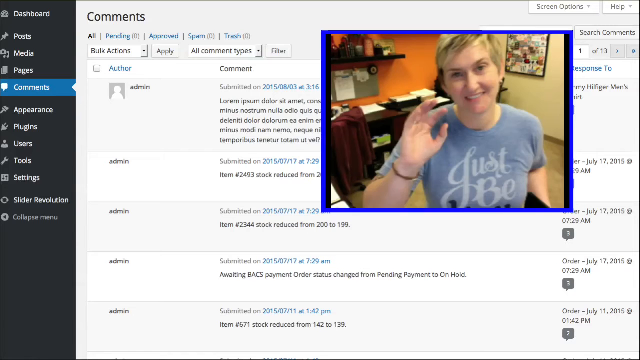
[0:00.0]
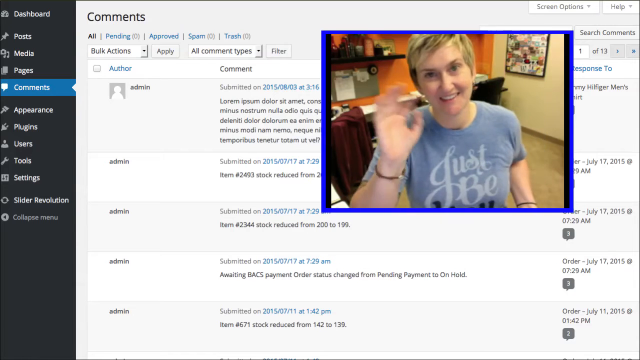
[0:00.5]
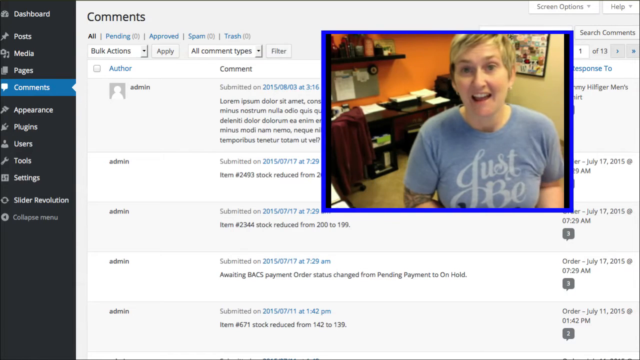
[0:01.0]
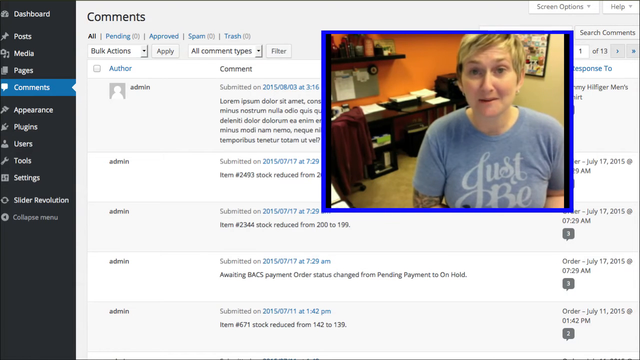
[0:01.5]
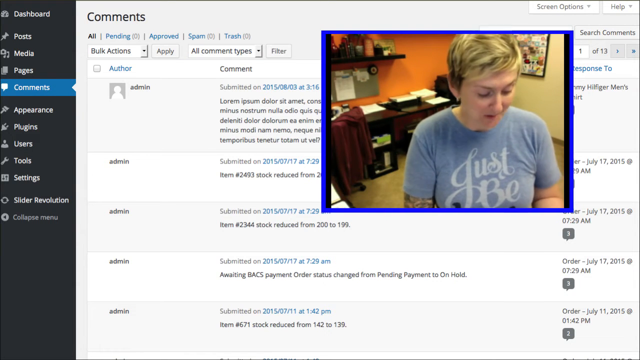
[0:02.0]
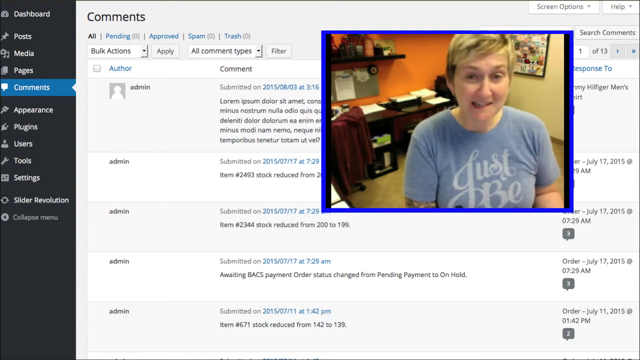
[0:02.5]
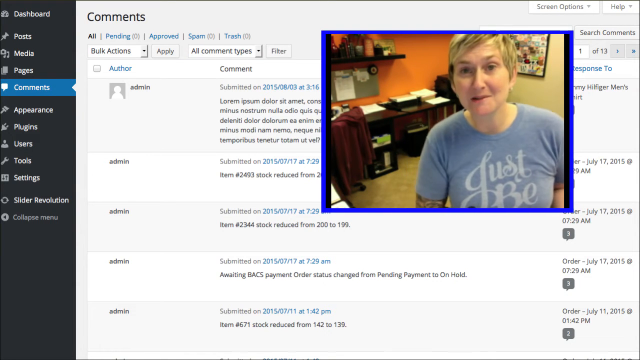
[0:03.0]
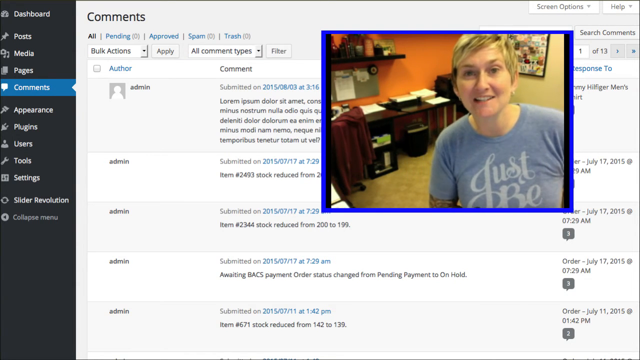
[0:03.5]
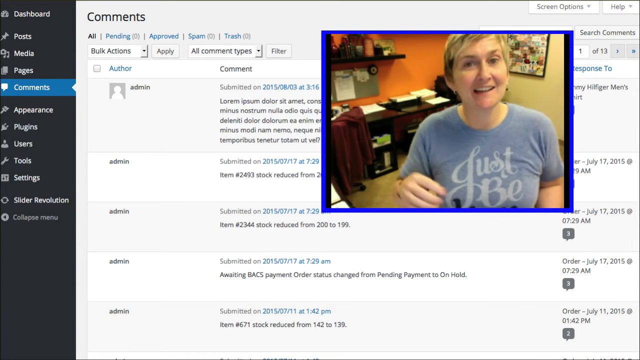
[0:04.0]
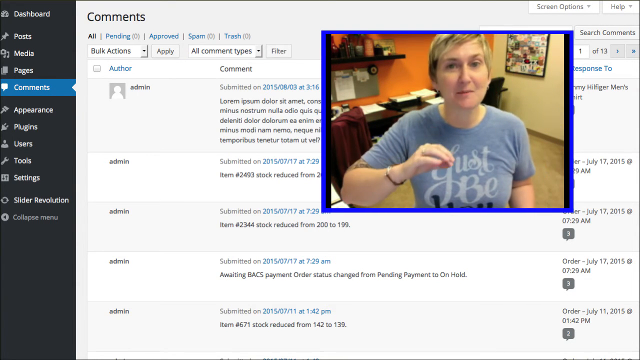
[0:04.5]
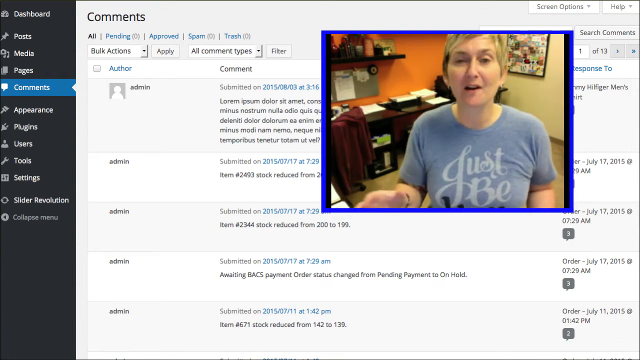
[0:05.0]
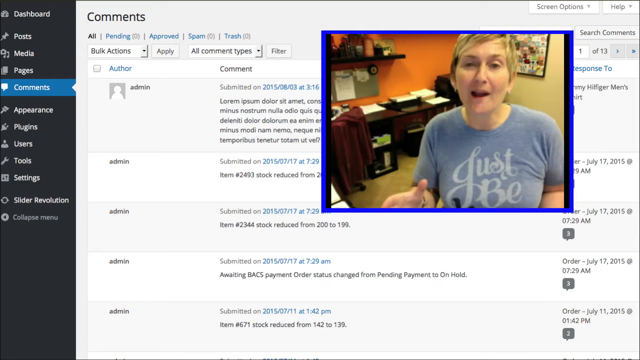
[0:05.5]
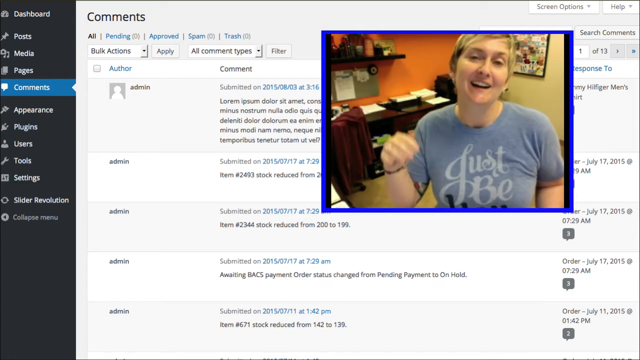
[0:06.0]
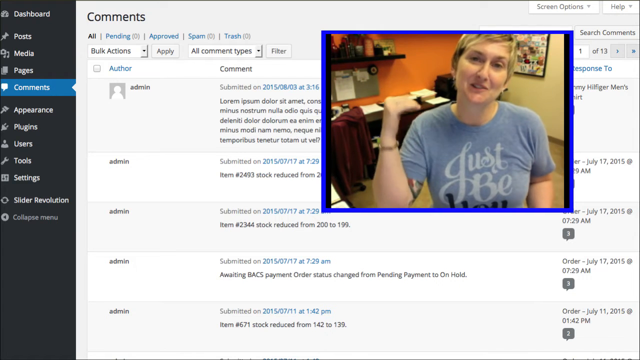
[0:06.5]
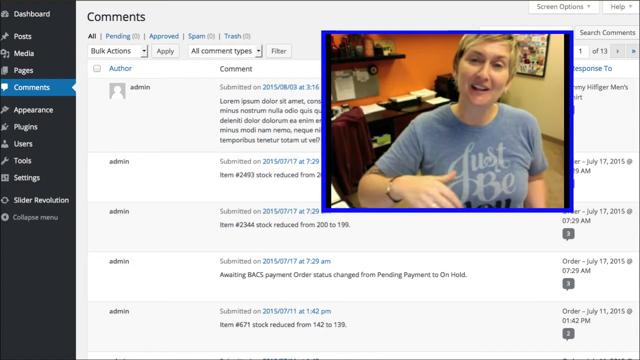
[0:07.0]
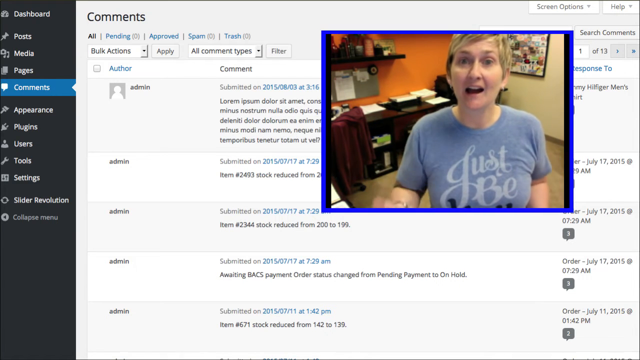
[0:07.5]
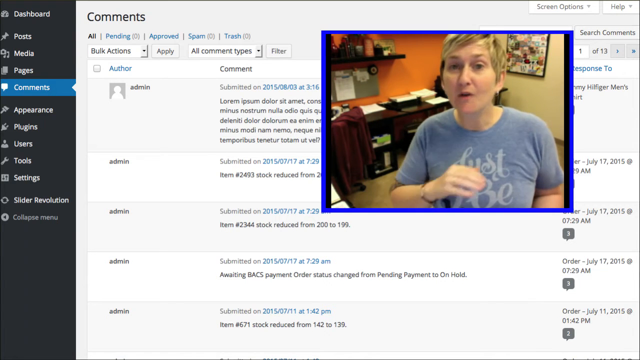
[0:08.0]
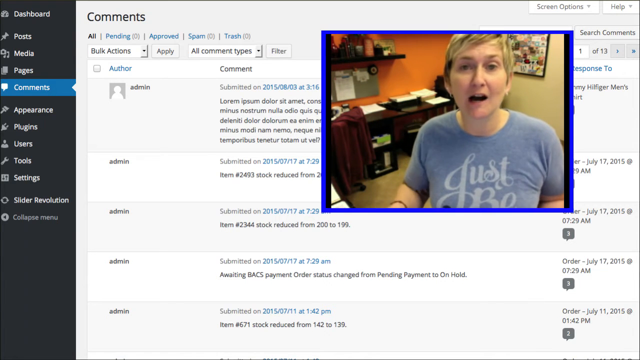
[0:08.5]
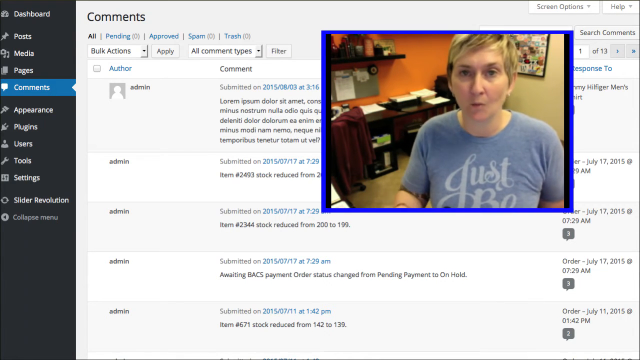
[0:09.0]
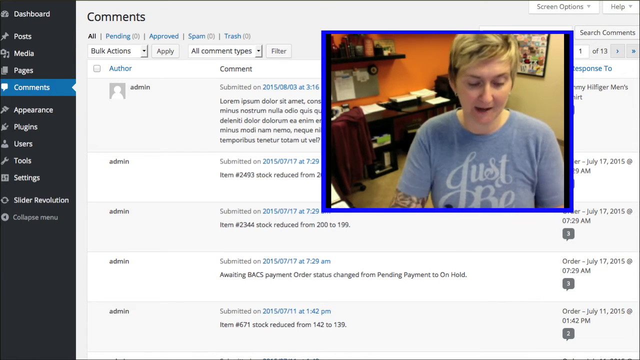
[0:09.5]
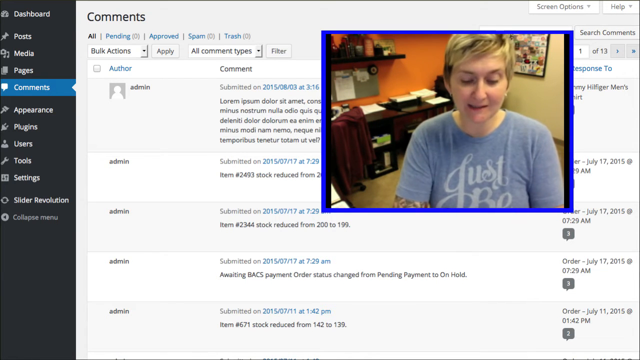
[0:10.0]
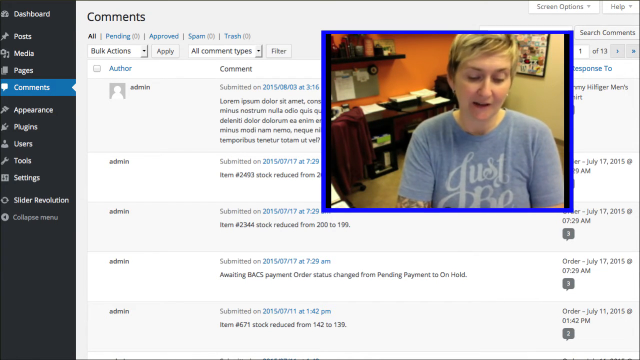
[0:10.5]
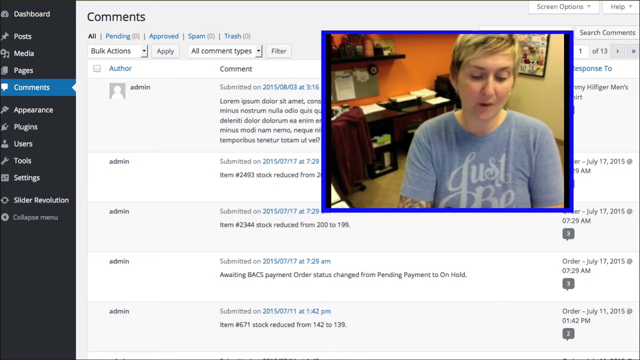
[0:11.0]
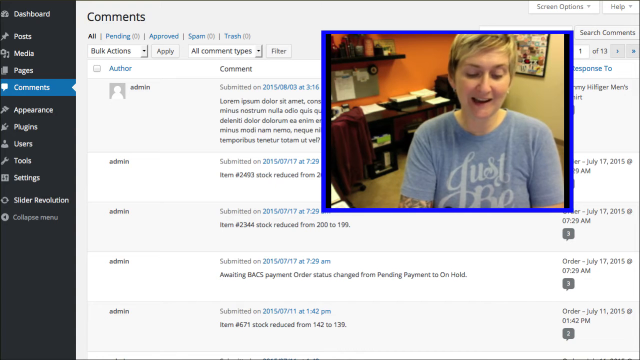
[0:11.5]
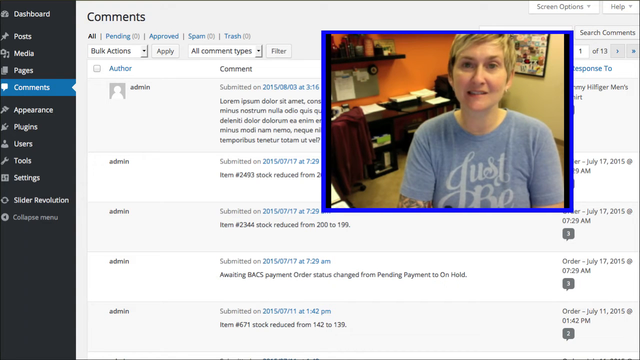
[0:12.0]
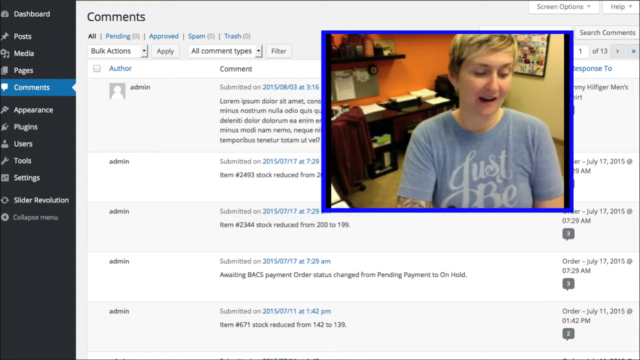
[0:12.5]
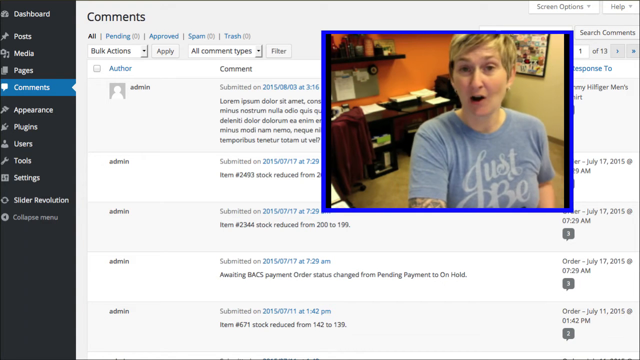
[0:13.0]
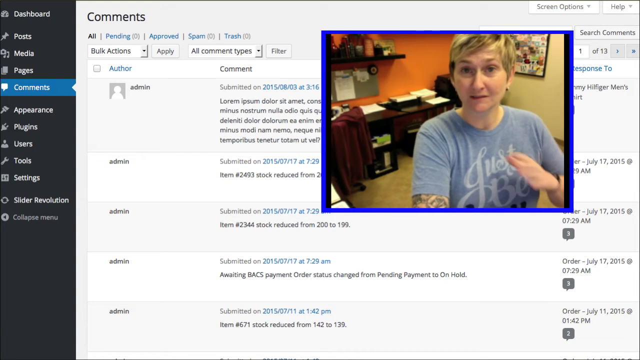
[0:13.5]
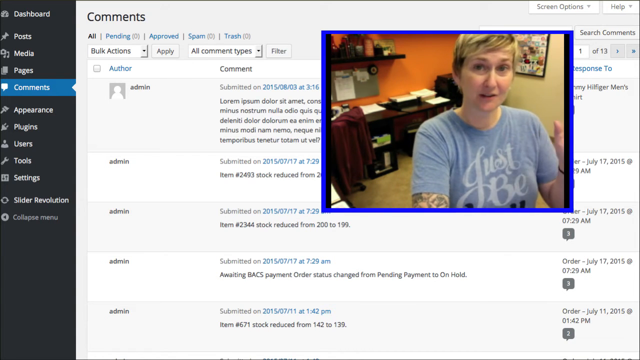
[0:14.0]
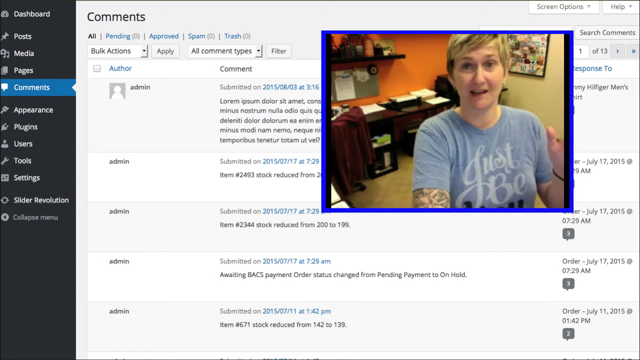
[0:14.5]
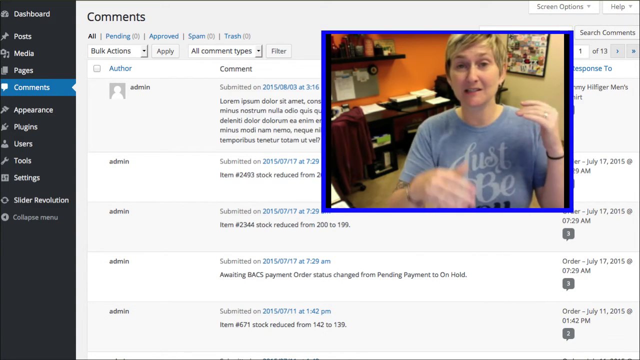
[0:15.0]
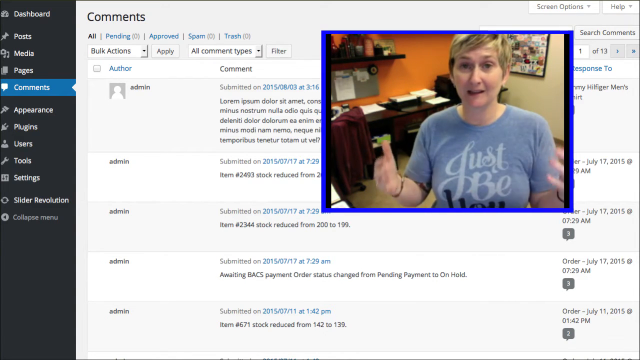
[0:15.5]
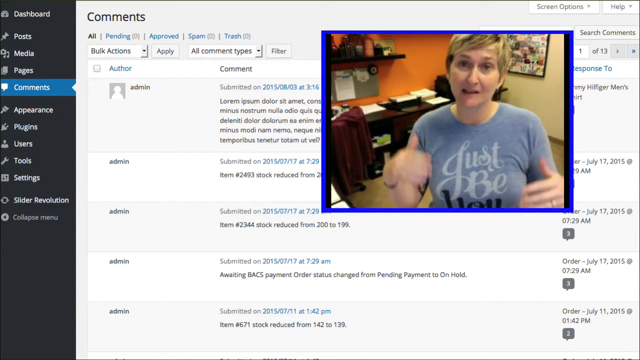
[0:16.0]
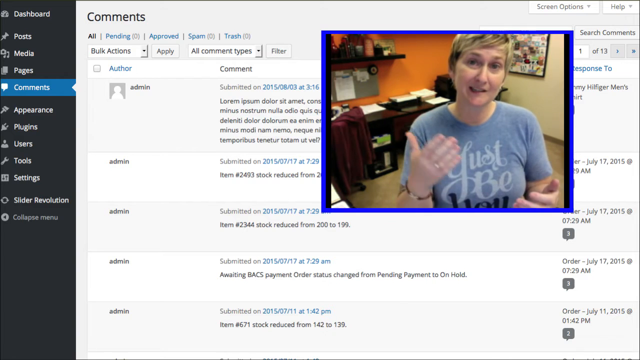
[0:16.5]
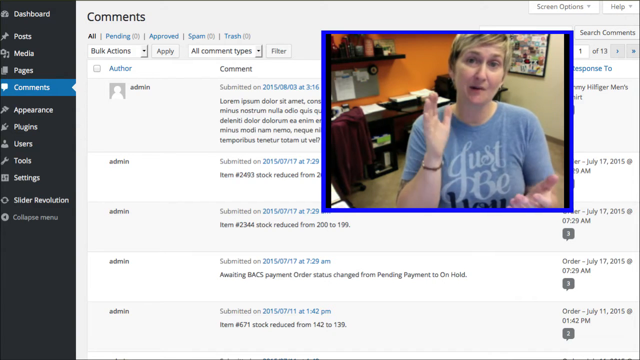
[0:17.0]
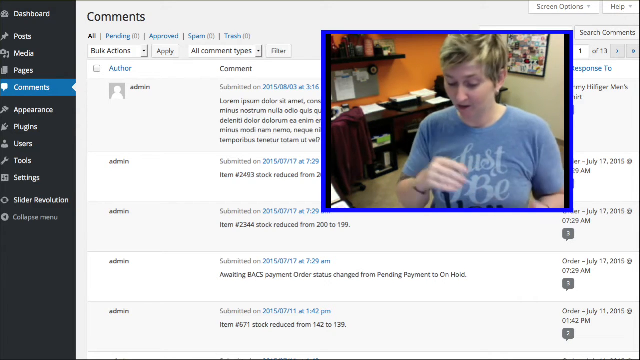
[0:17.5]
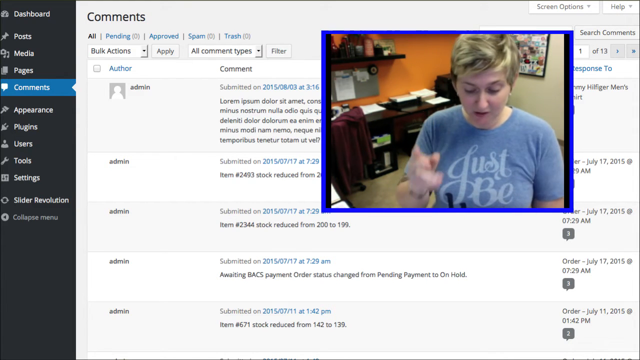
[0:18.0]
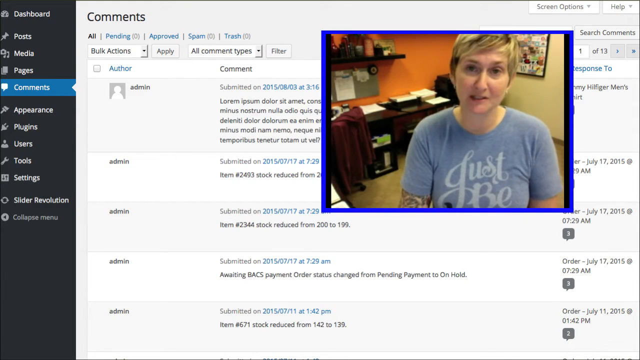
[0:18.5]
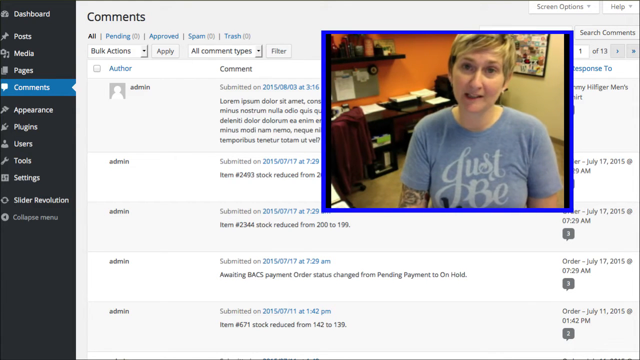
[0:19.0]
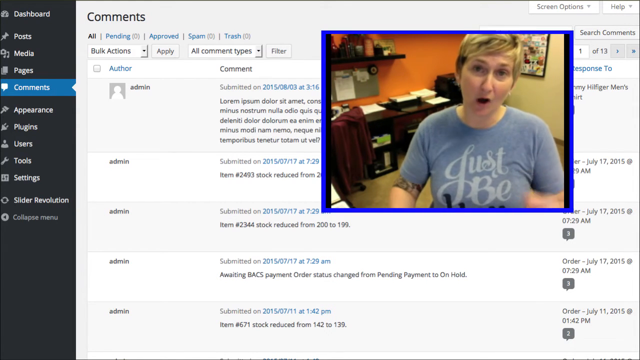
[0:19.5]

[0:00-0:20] The screen is white, with a black dashboard with white text on the left-hand side. The white page has black text reading "comments", followed by user comments. In the upper right-hand section, a video with a blue border is playing, showing a woman in a light blue t-shirt that says "just be". She waves at the camera several times with her right hand, then moves her hand down out of frame and talks to the camera, glancing down to her left and back at the camera. She lifts her right hand with her index finger and thumb together at around chest height, extends it forward in almost a handshake shape, and moves it up and down as she talks, then side to side, before rotating it and lifting it up and down again. She shakes her head as she looks down and talks. She lifts her left hand in a waving action, then brings her right hand up, palms facing her body, and moves both hands outward at the same time. She then claps her hands together and points her right finger forward.